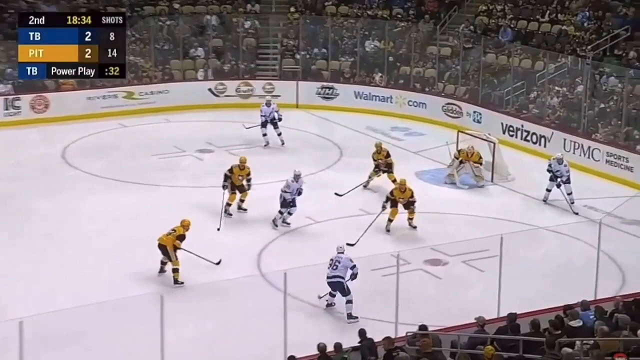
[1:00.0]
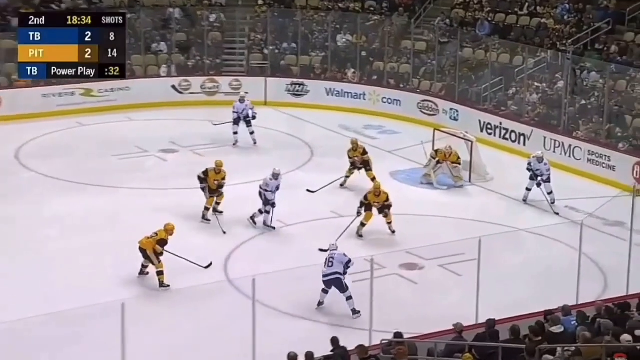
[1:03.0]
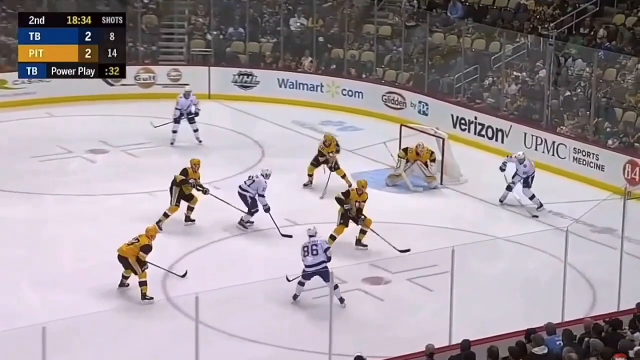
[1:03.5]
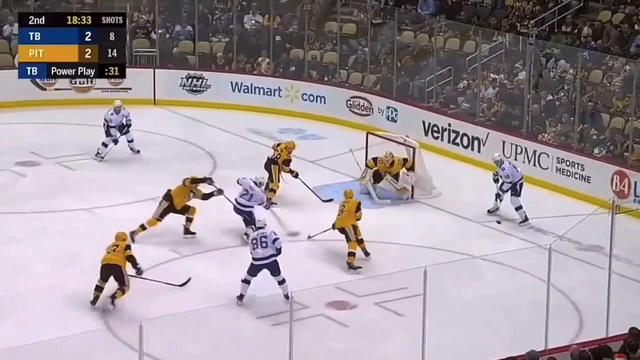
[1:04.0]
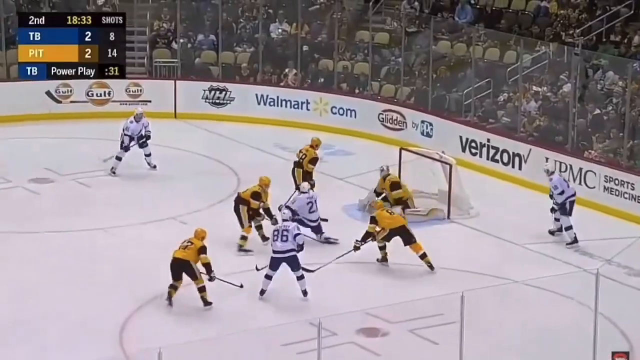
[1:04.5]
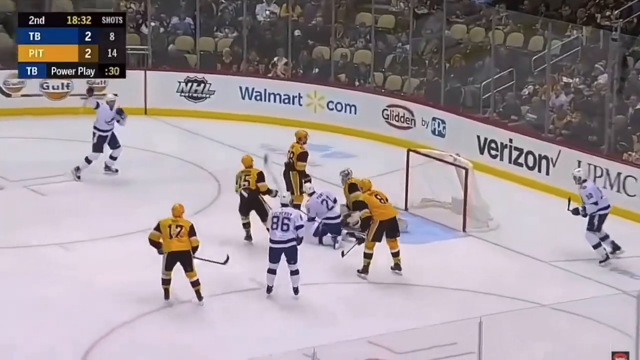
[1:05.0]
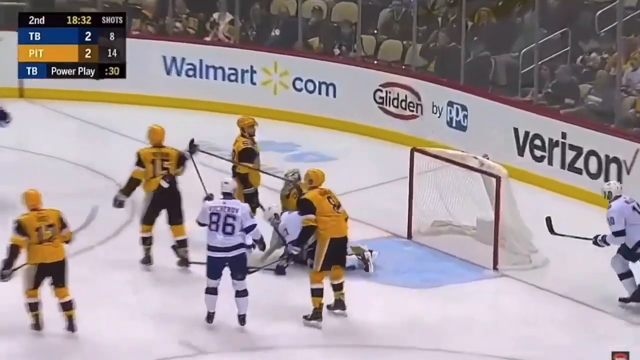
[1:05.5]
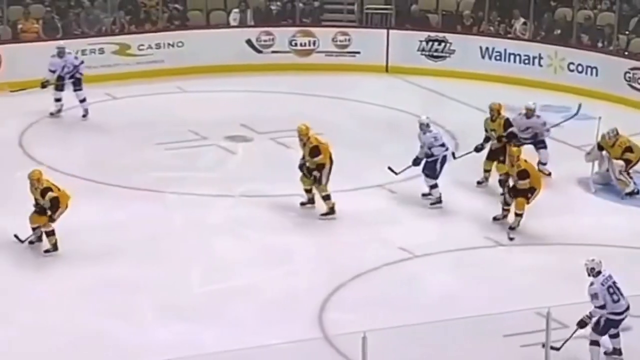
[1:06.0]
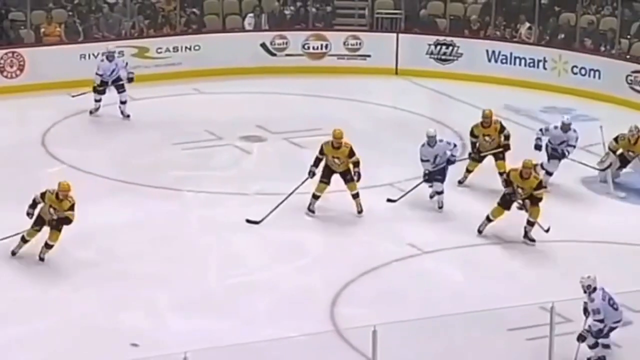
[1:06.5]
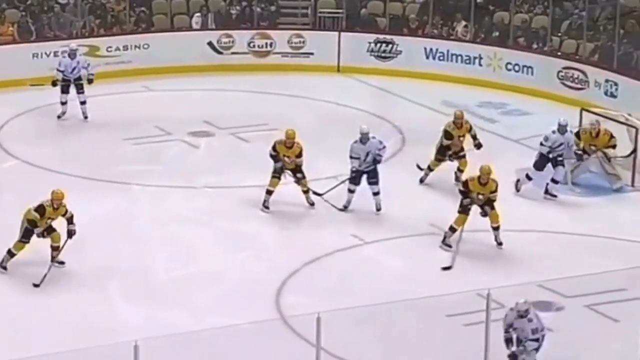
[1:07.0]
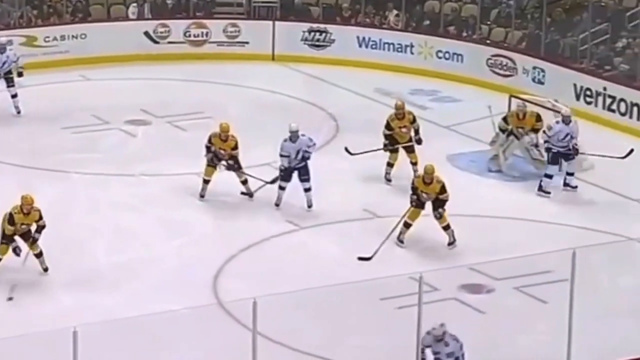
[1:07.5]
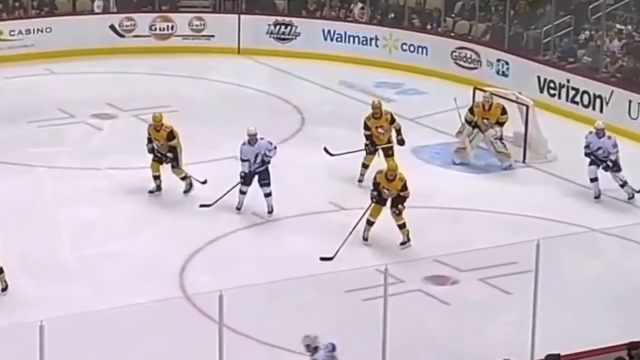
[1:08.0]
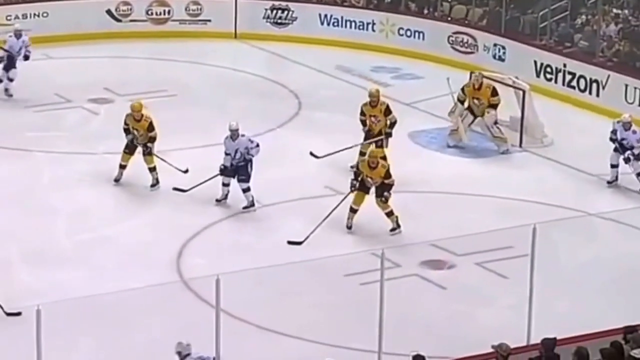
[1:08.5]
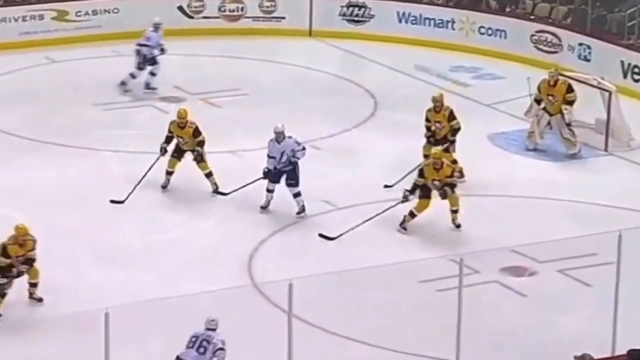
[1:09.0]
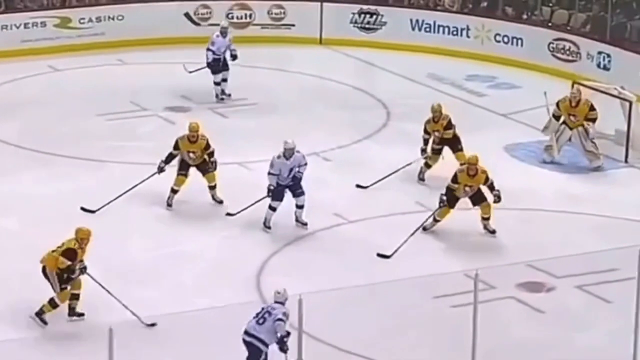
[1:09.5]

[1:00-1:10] The game continues in the second period with 18 minutes and 34 seconds left. Visiting Tampa Bay and home team Pittsburgh each have two goals, with Tampa Bay at eight shots on goal and Pittsburgh at 14. Tampa Bay is on a power play with 32 seconds left. Tampa Bay wears white tops and blue bottoms, while Pittsburgh wears yellow and black tops and black and yellow bottoms.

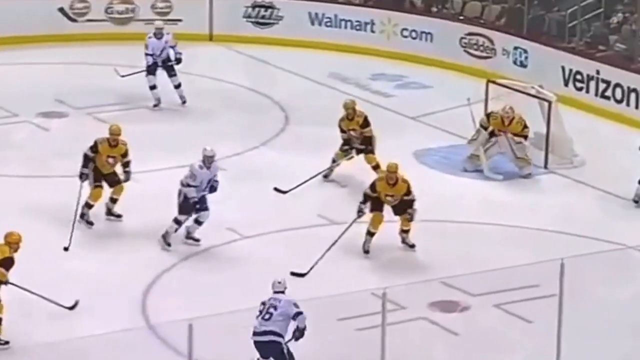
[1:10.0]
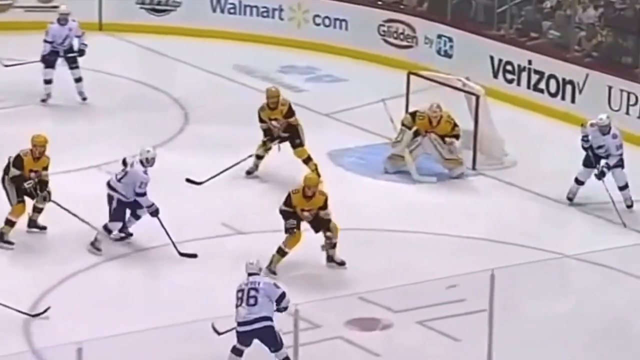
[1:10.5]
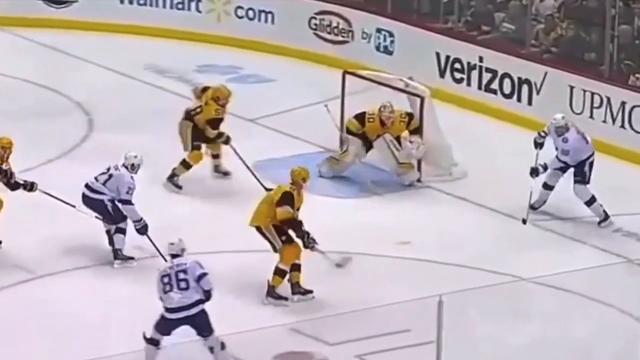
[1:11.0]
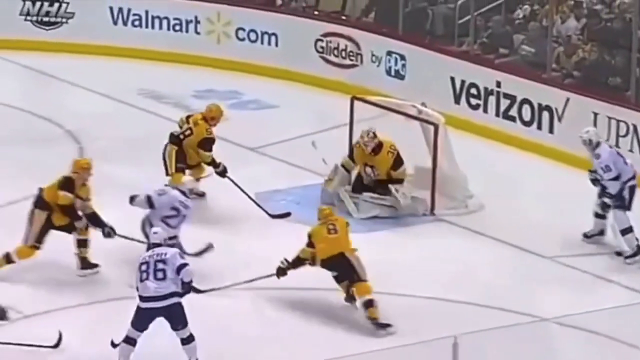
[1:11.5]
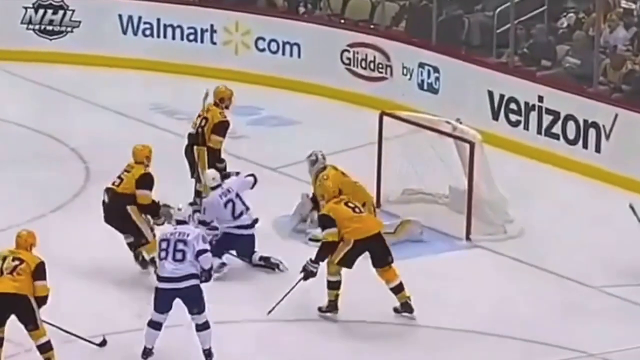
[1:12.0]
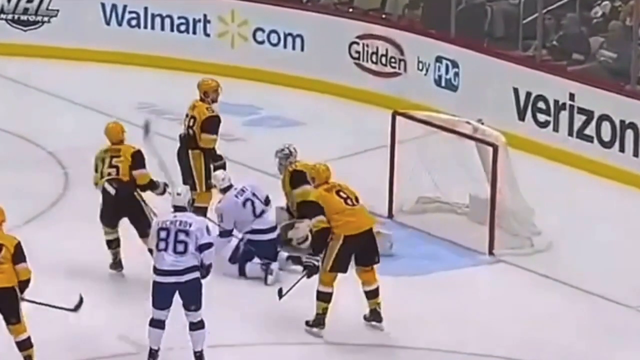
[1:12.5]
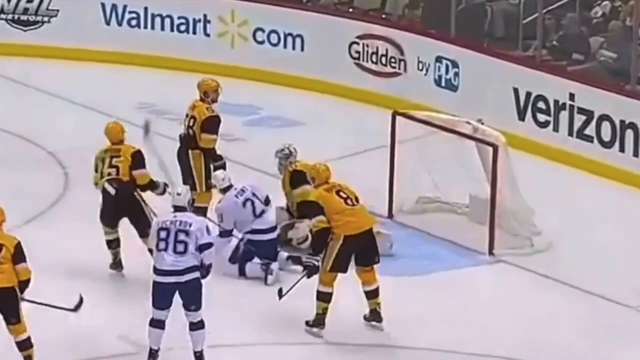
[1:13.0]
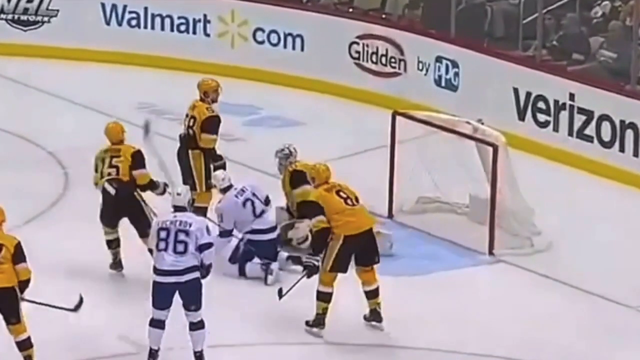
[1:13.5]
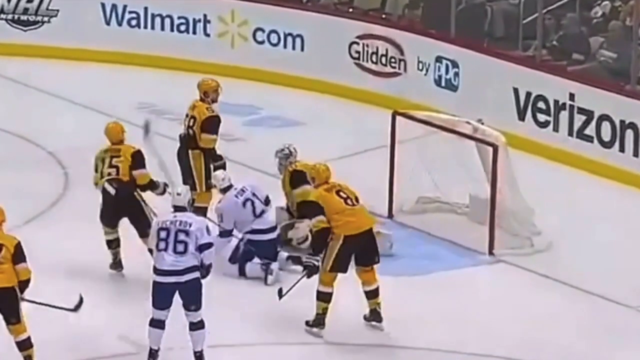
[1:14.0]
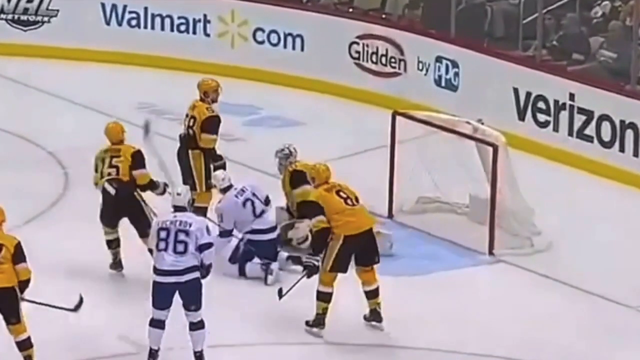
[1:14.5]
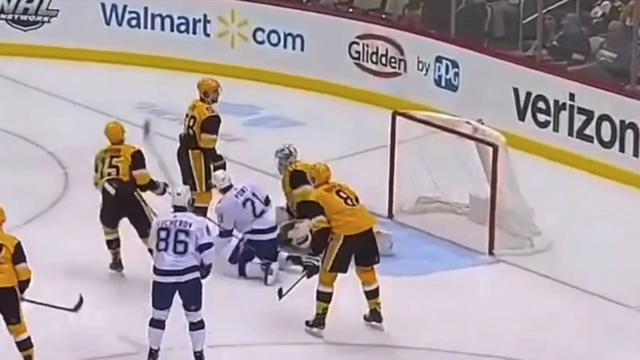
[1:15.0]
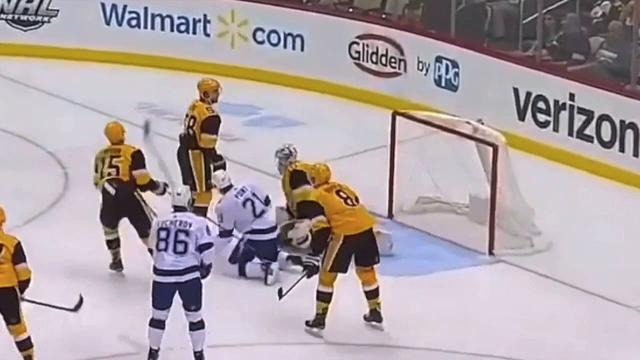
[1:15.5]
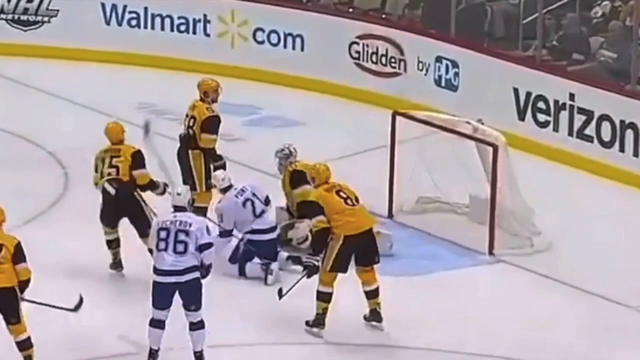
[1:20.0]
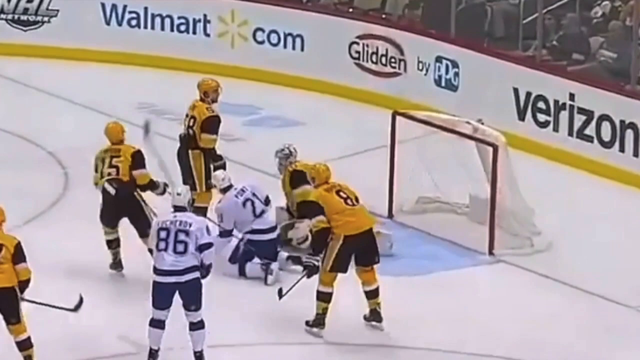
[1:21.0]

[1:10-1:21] In the NHL game between visiting Tampa Bay and home team Pittsburgh, the score is 2-2 in the second period with 18 minutes and 30 seconds left. Pittsburgh is in a power play situation. Number 86 passes to another player, and a goal is scored, bringing the score to Tampa Bay 3, Pittsburgh 2.